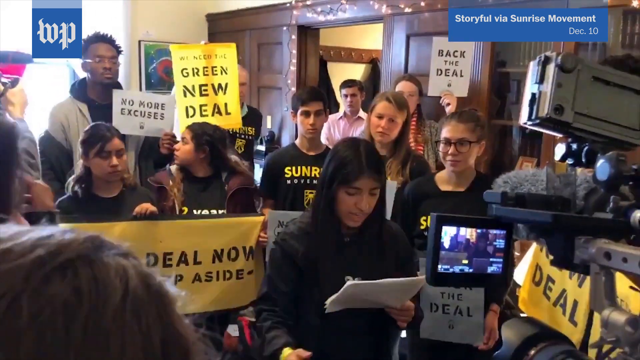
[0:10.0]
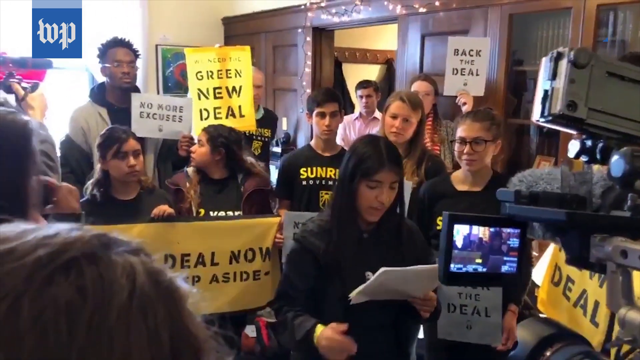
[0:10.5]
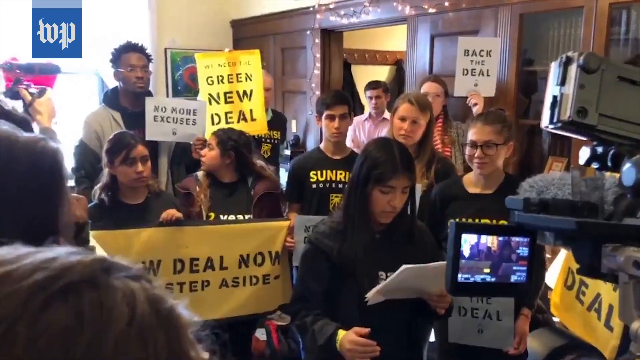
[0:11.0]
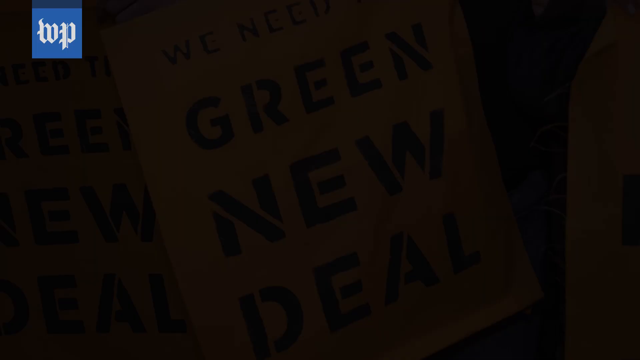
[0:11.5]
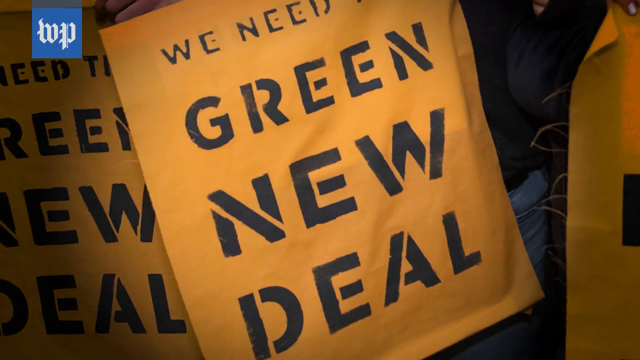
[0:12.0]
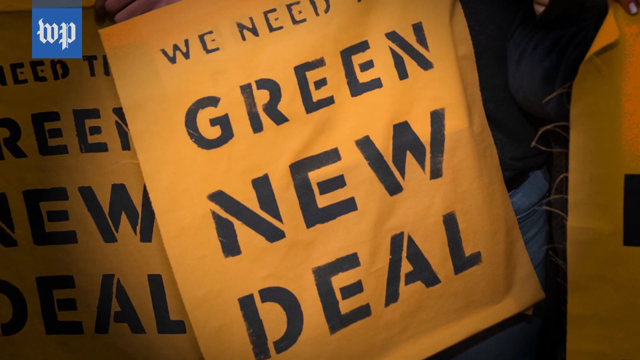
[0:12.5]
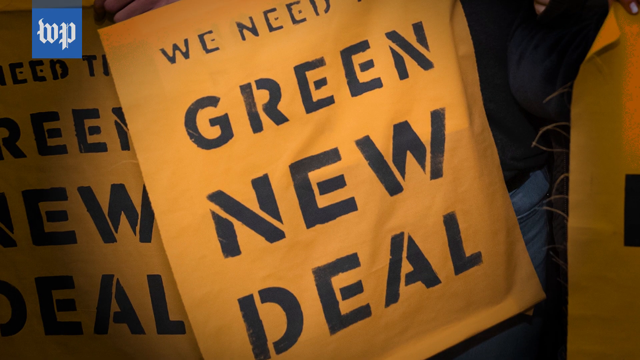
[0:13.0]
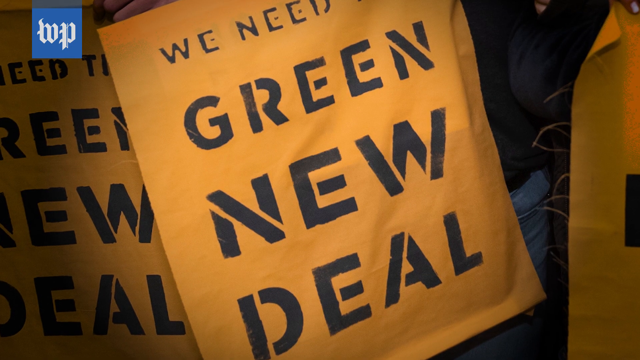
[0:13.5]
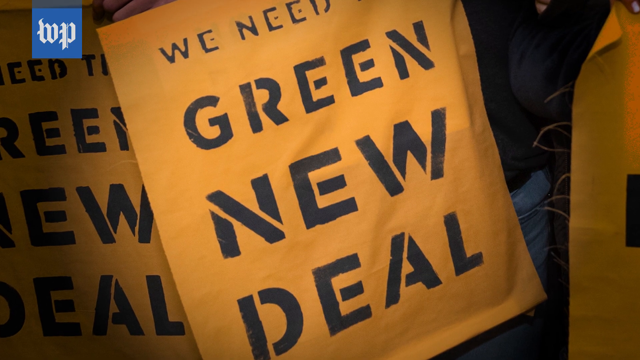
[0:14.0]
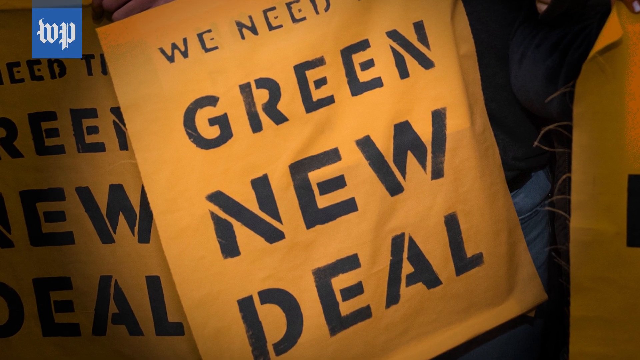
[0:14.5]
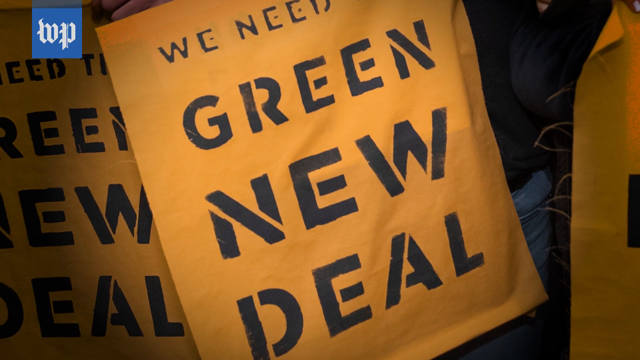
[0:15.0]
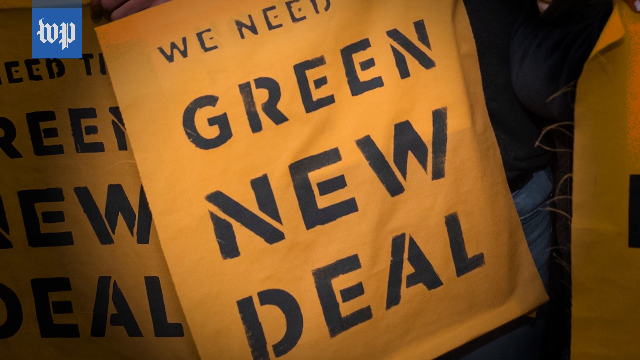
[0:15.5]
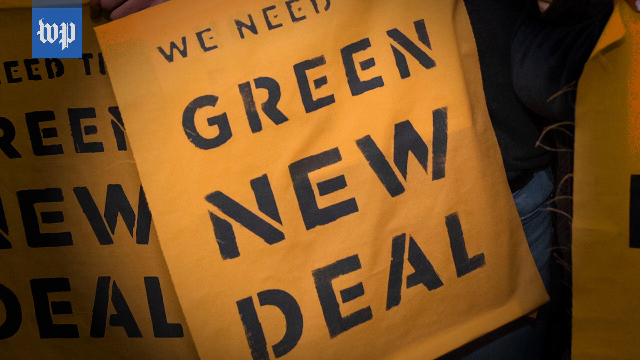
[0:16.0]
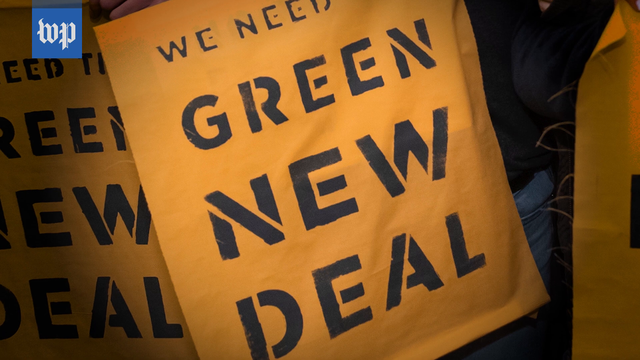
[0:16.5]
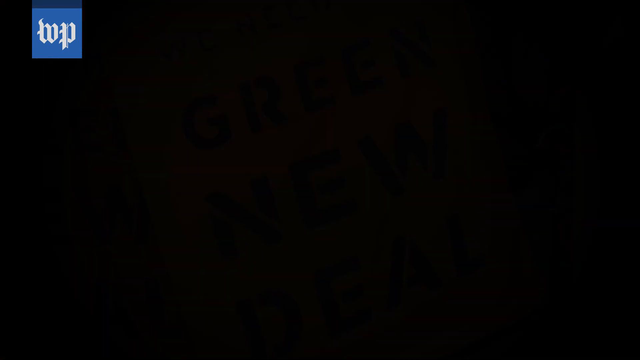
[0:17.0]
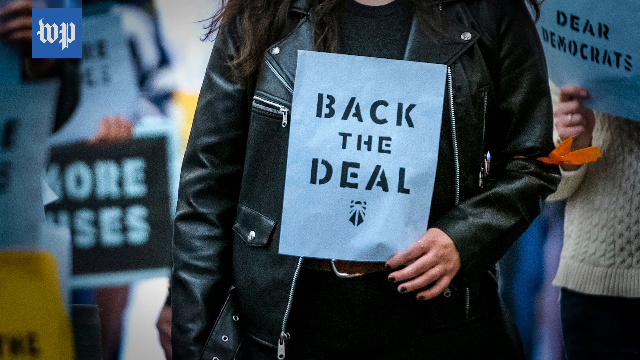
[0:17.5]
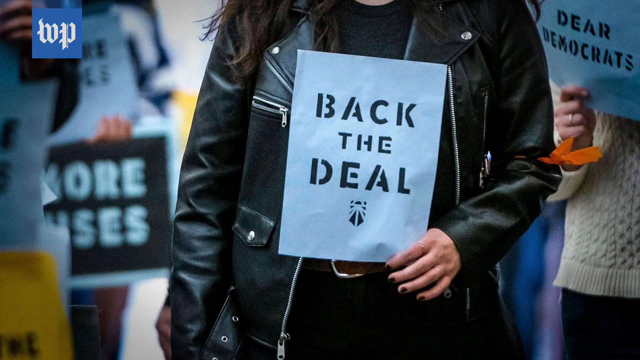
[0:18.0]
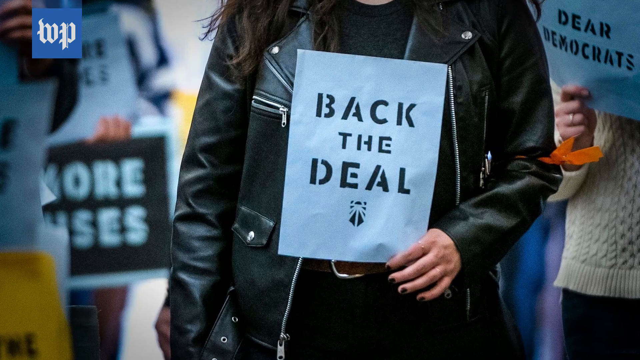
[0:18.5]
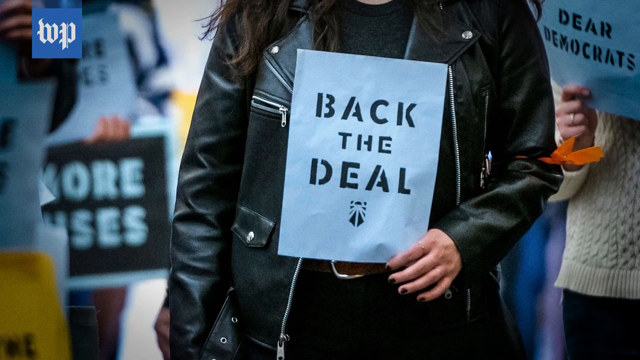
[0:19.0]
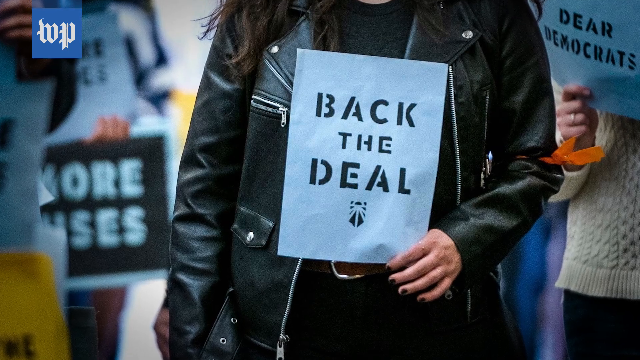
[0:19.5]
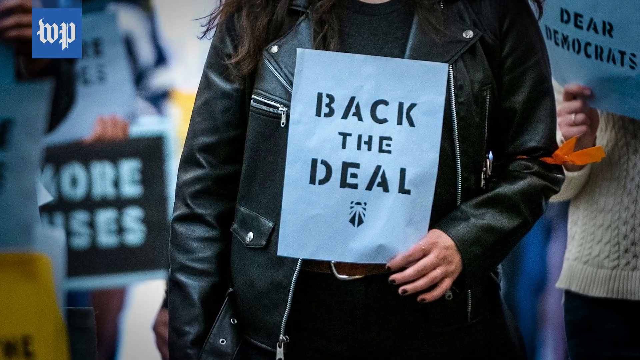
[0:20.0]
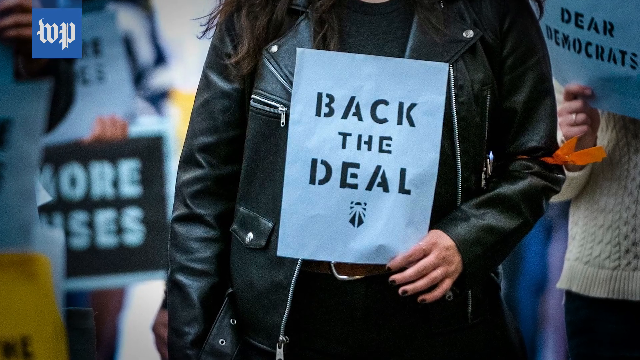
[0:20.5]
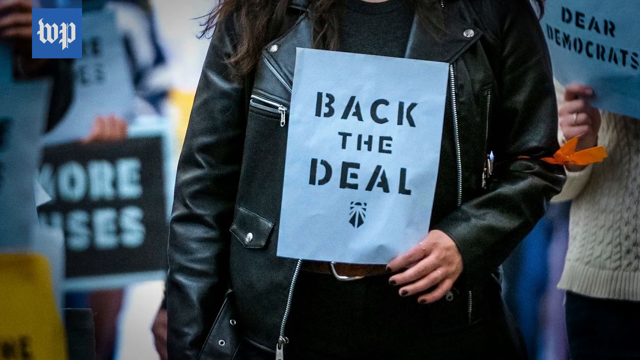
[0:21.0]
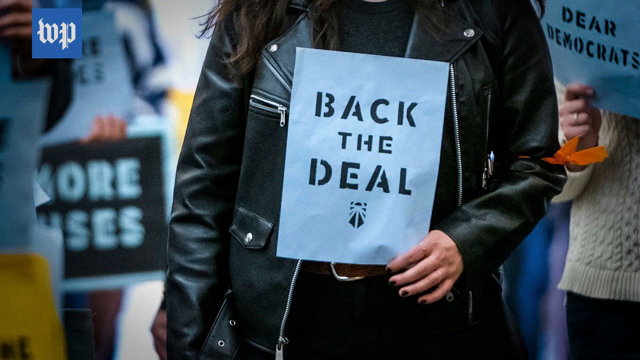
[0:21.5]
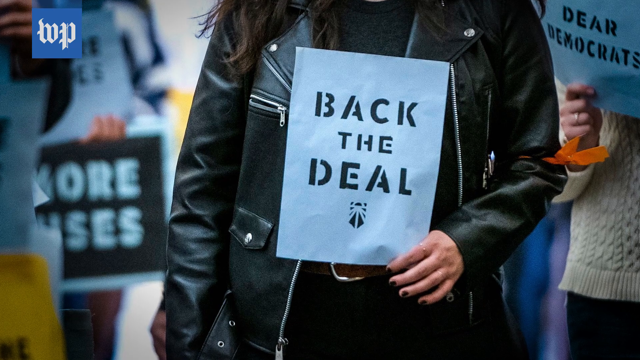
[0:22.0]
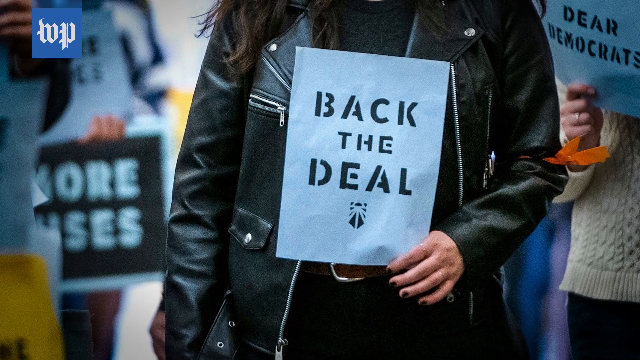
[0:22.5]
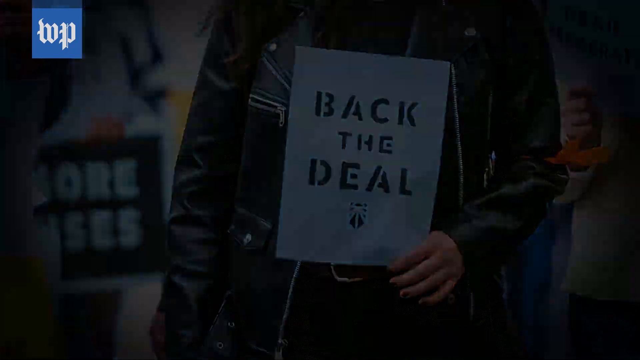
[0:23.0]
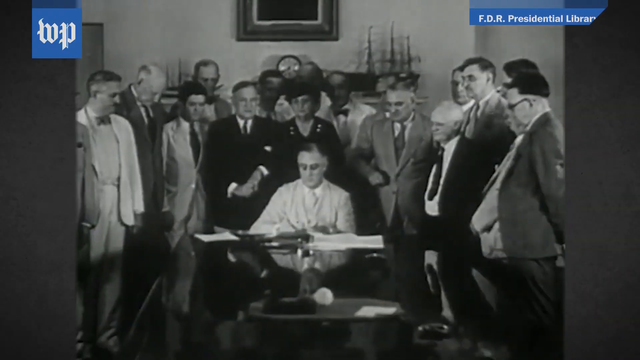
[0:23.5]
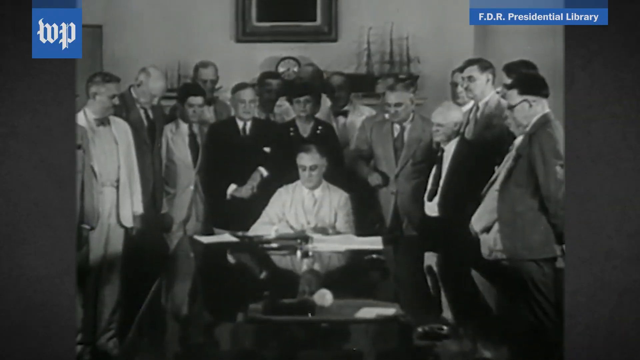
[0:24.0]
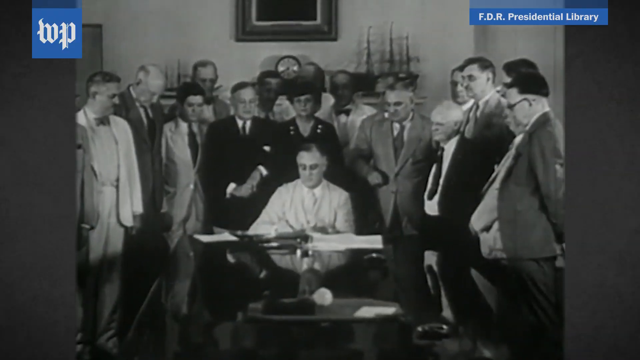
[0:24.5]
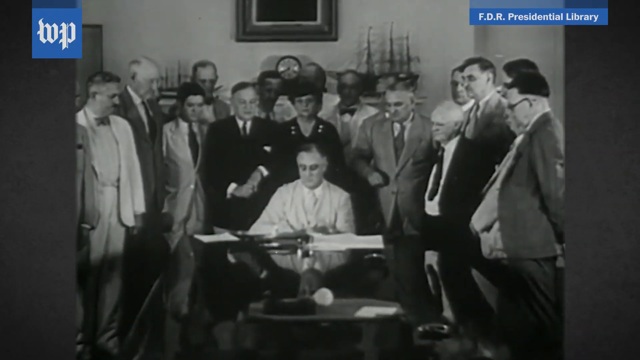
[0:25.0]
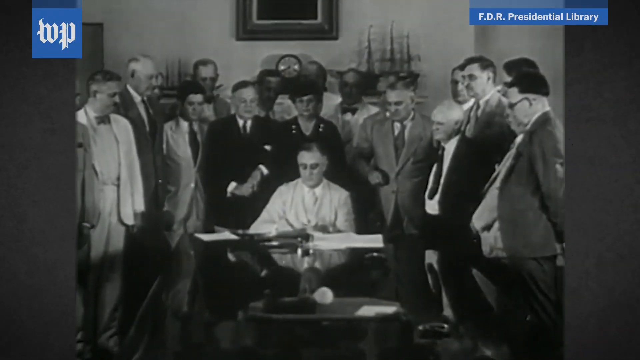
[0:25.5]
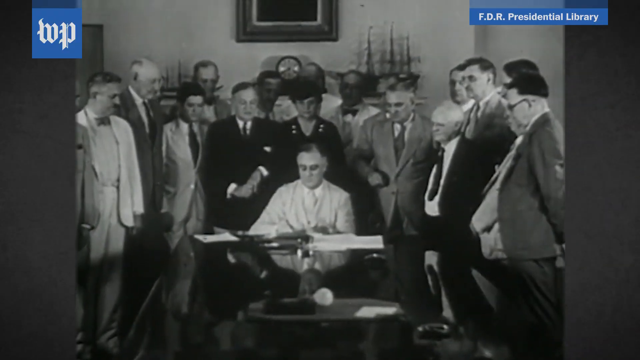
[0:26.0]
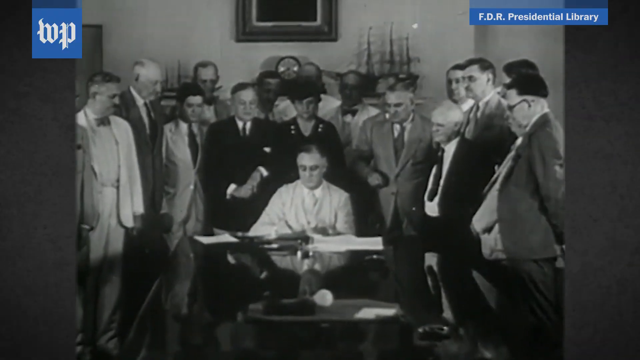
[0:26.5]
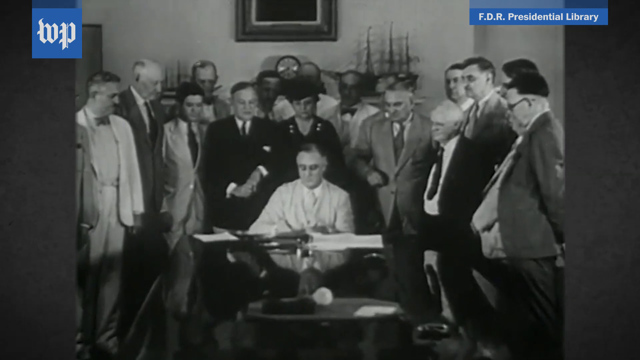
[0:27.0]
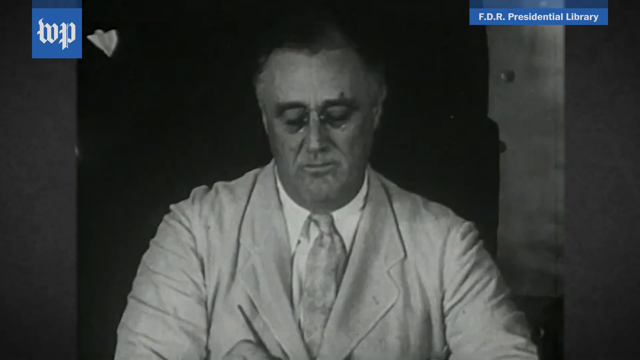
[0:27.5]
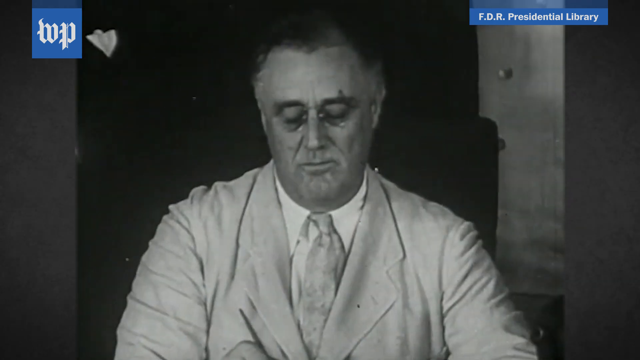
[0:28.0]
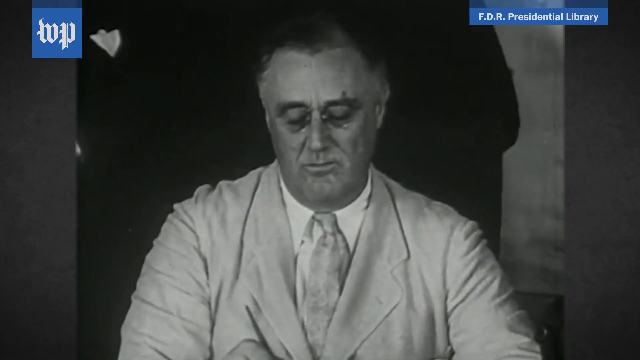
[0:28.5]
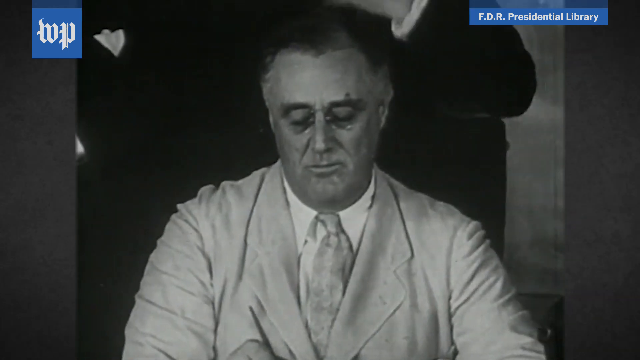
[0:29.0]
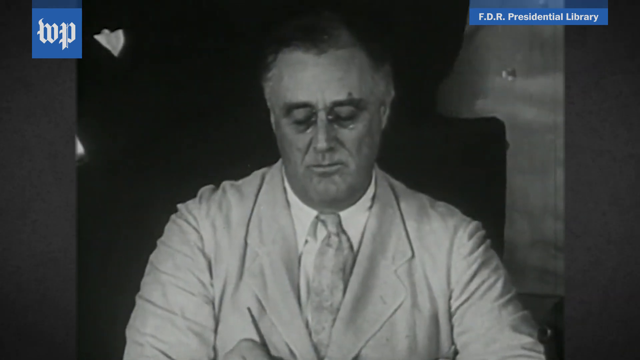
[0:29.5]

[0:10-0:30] The girl continues her speech. There is a sign reading "we need the Green New Deal." A girl holds a paper that says "Back the Deal" with the Sunrise Movement logo; she wears a black leather jacket and has black fingernails. Then a black-and-white photo appears, apparently from the FDR presidential library, showing a man who seems to be a president signing a bill. He wears a white suit with something of an unclear color.